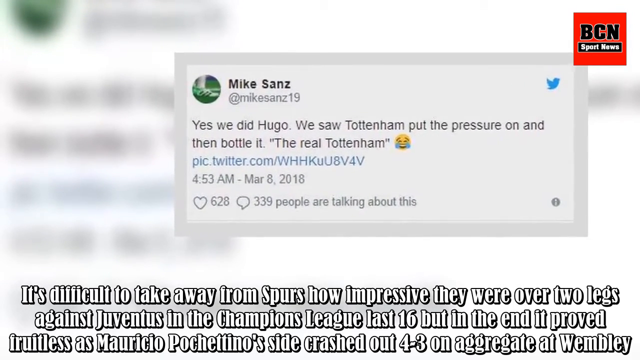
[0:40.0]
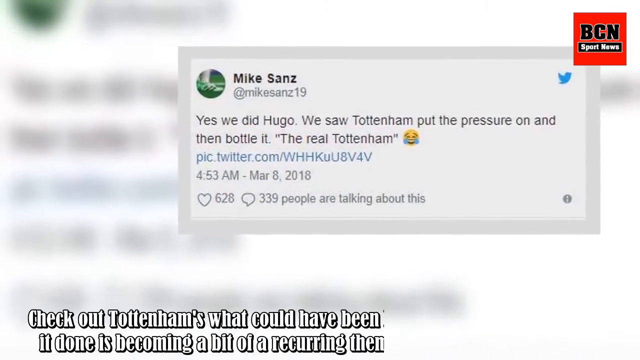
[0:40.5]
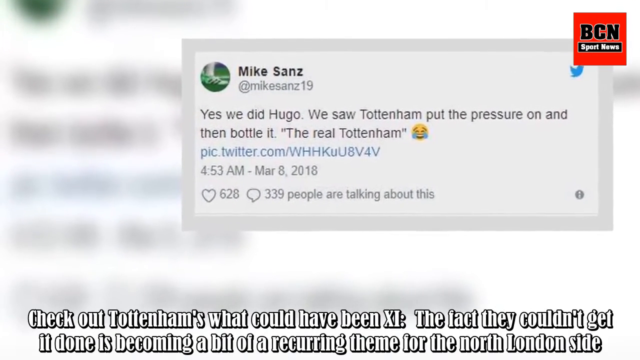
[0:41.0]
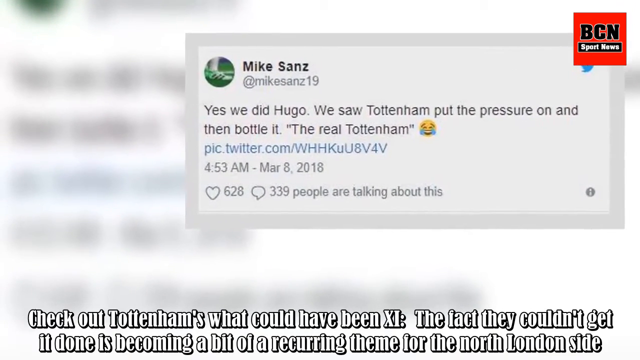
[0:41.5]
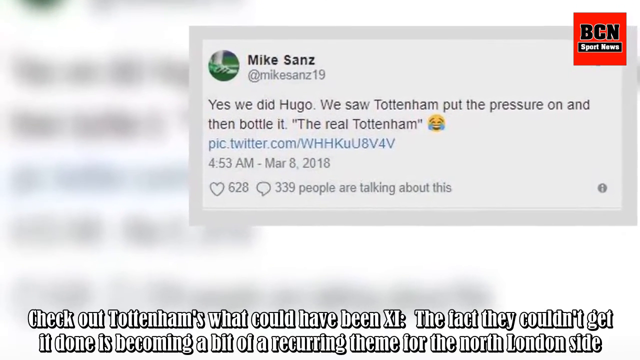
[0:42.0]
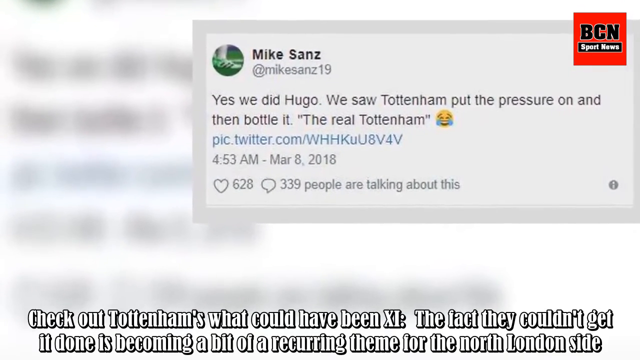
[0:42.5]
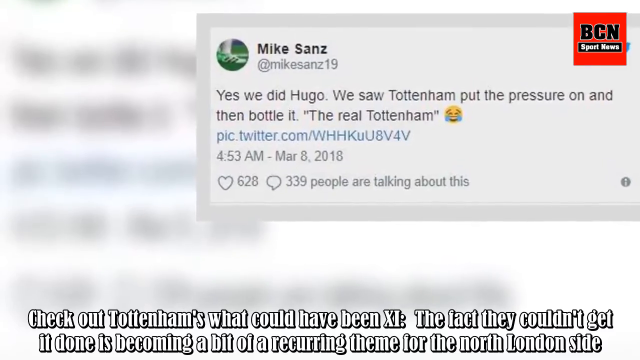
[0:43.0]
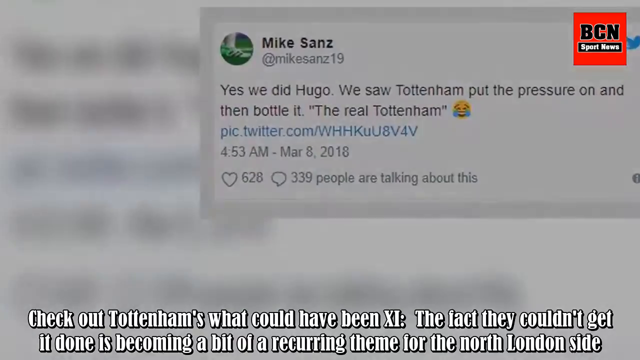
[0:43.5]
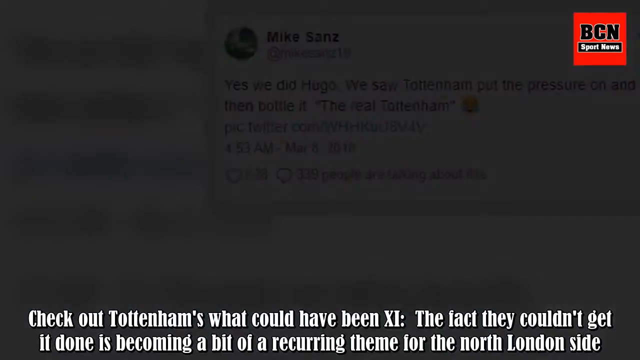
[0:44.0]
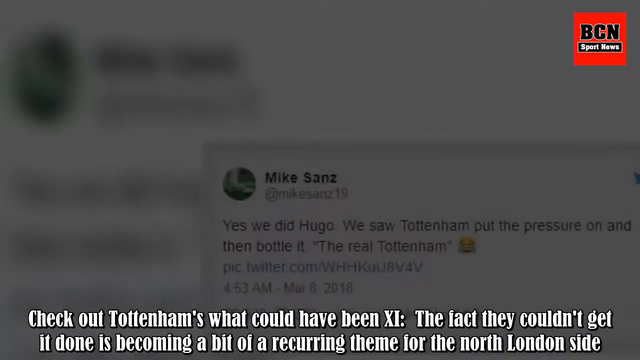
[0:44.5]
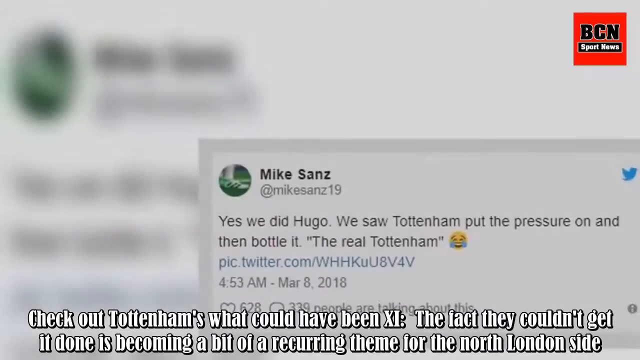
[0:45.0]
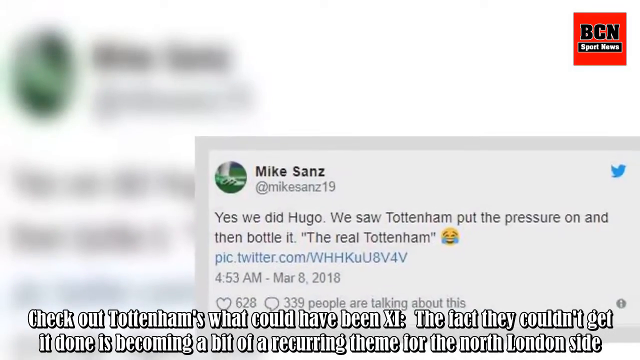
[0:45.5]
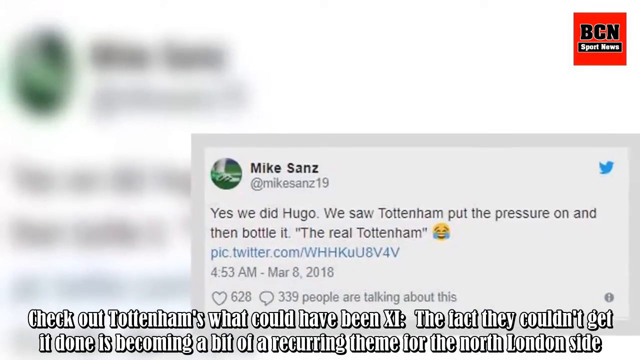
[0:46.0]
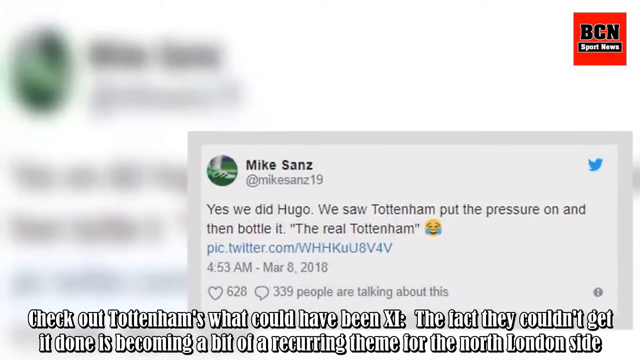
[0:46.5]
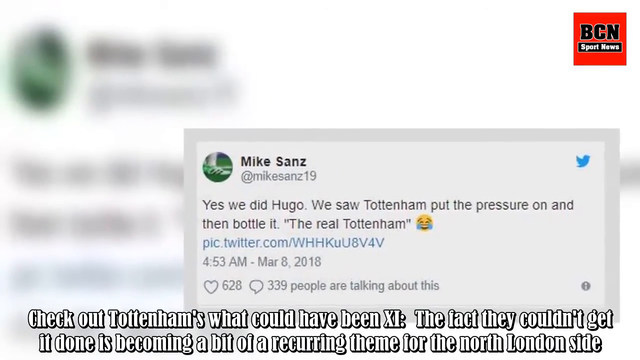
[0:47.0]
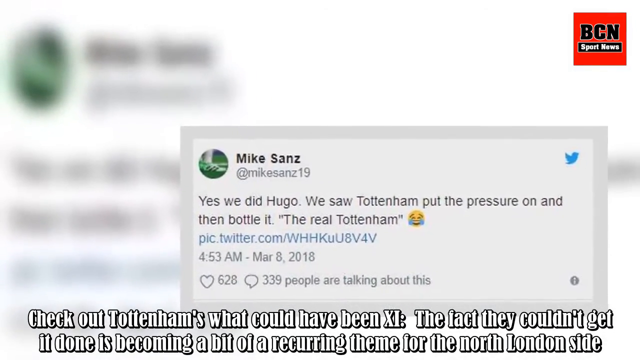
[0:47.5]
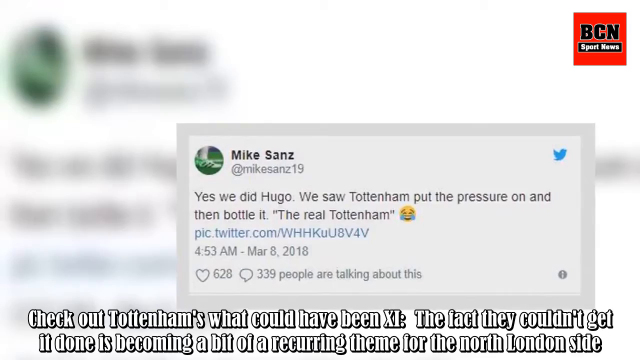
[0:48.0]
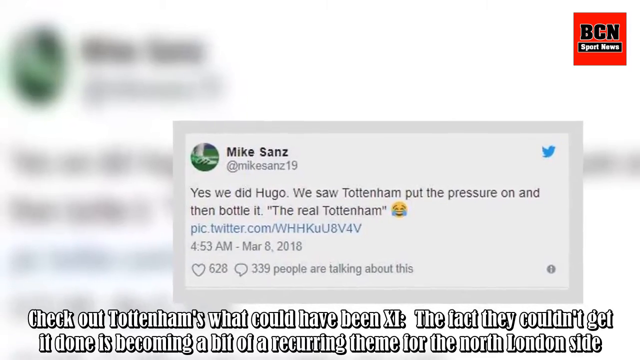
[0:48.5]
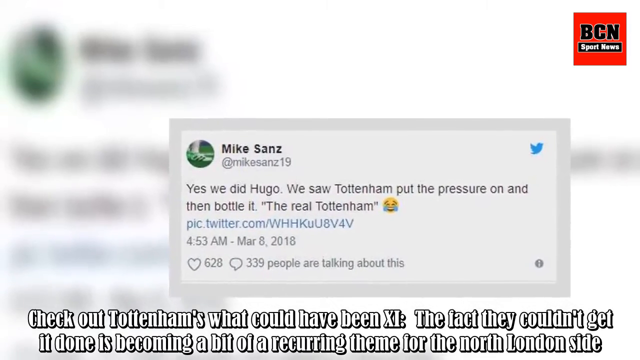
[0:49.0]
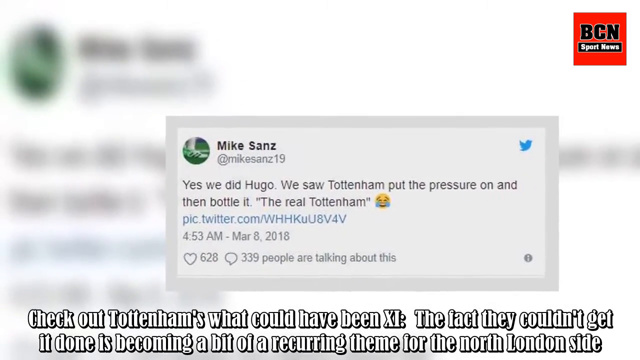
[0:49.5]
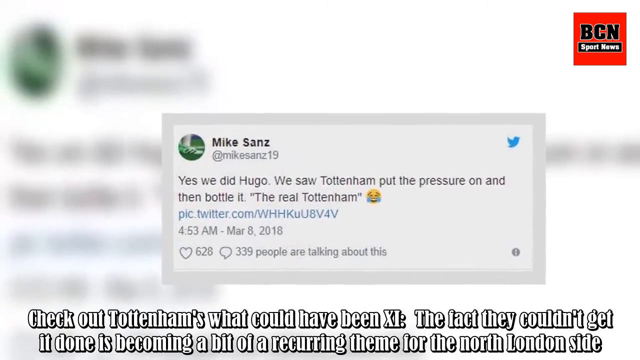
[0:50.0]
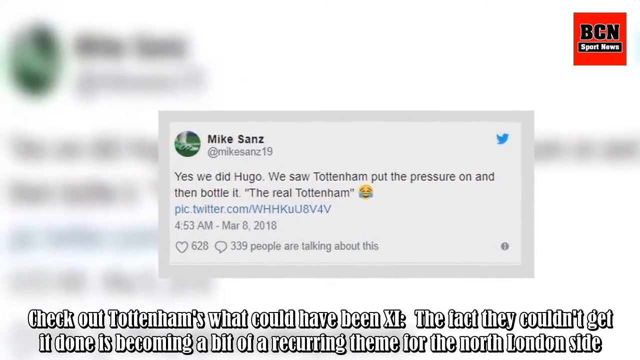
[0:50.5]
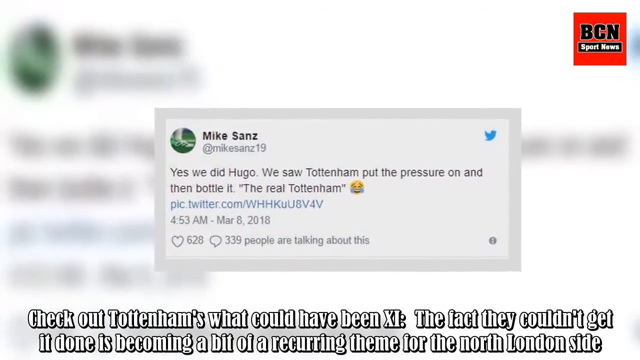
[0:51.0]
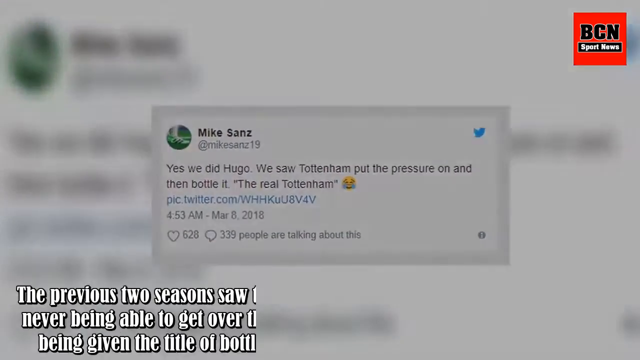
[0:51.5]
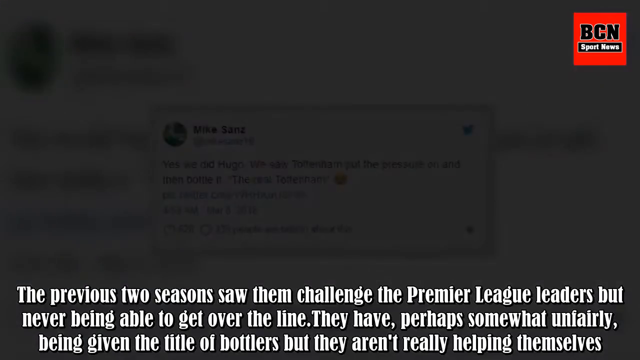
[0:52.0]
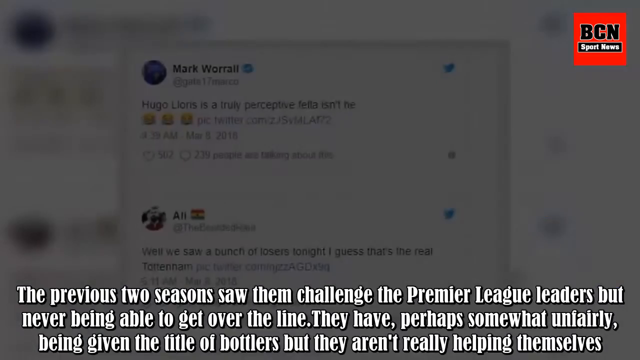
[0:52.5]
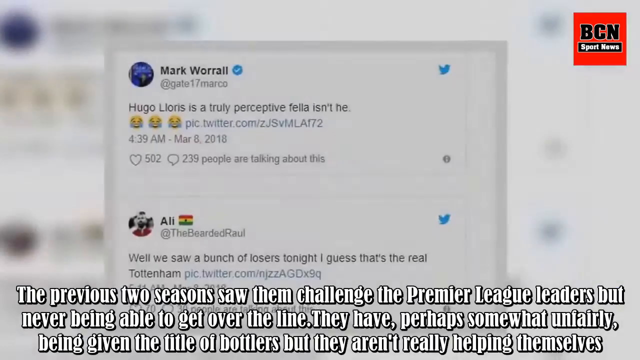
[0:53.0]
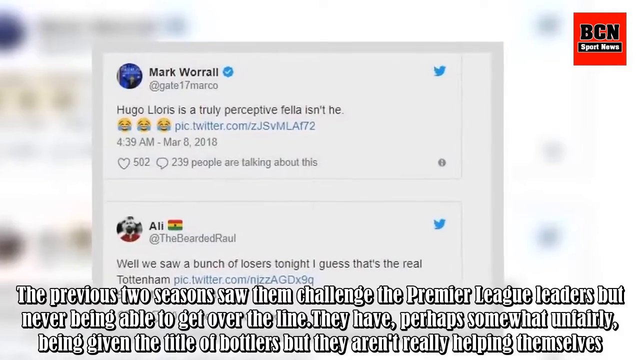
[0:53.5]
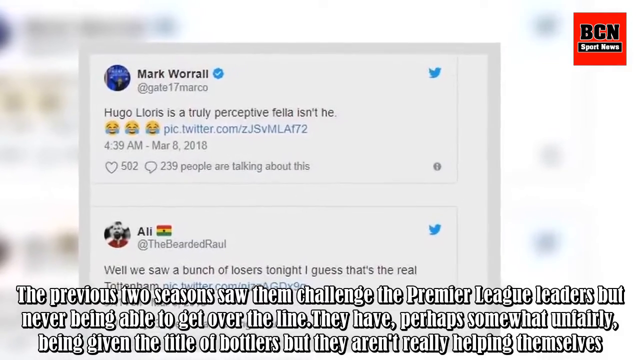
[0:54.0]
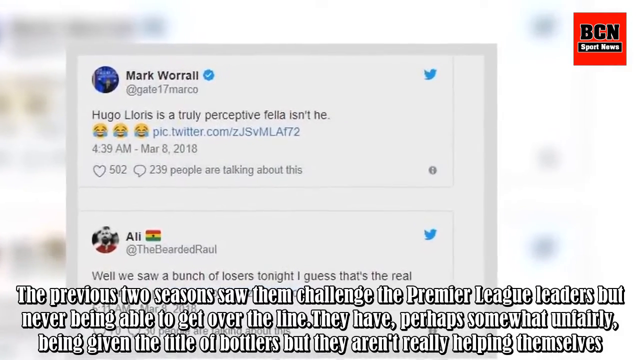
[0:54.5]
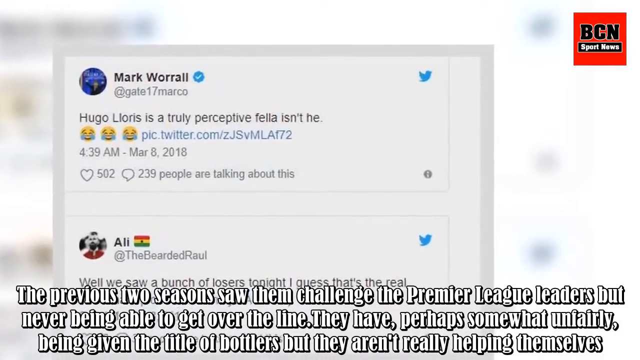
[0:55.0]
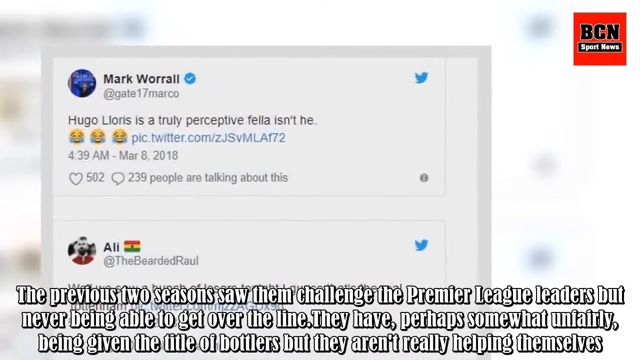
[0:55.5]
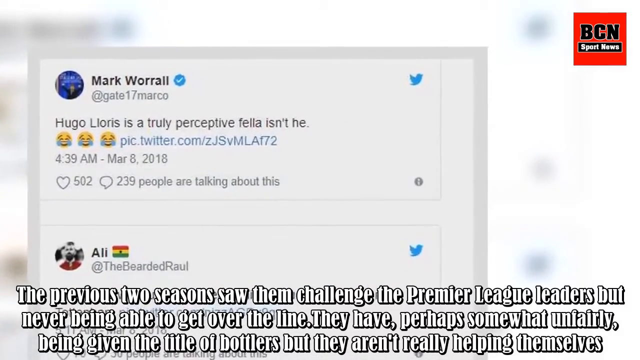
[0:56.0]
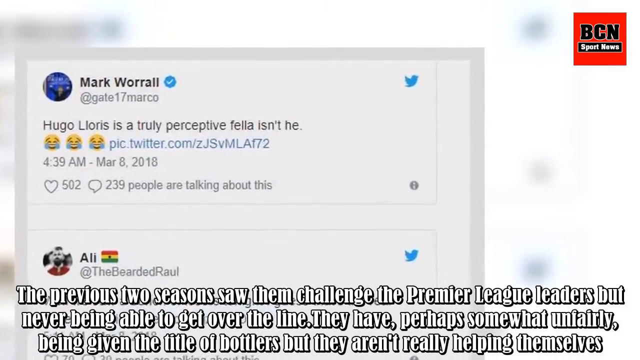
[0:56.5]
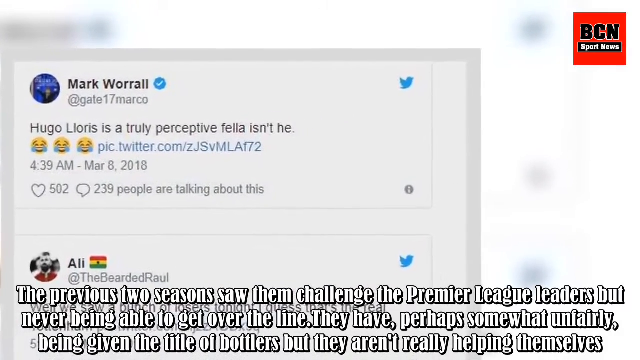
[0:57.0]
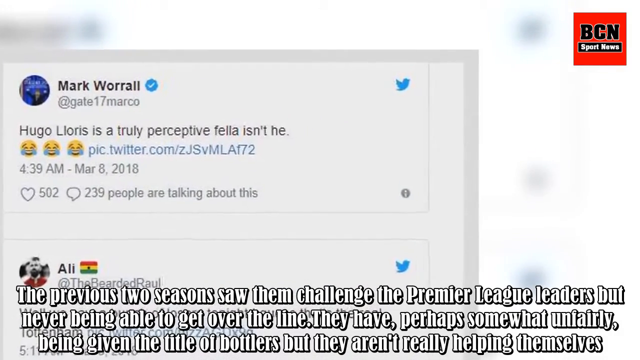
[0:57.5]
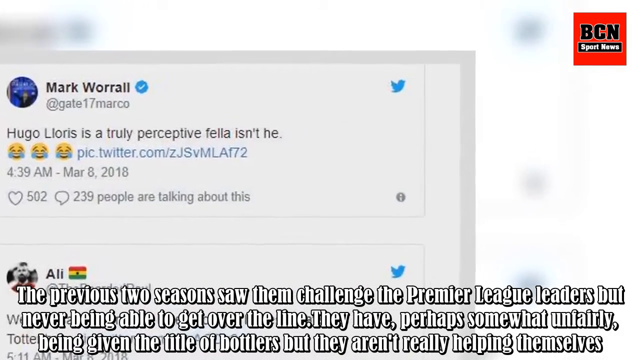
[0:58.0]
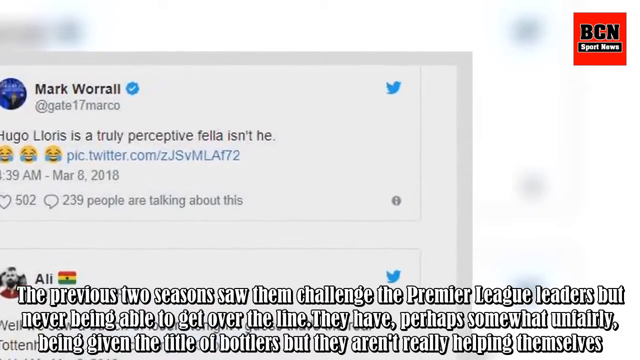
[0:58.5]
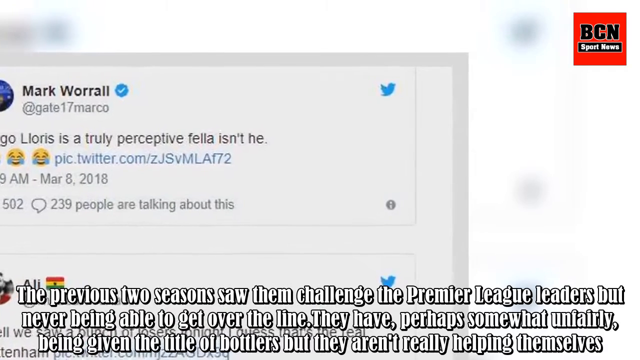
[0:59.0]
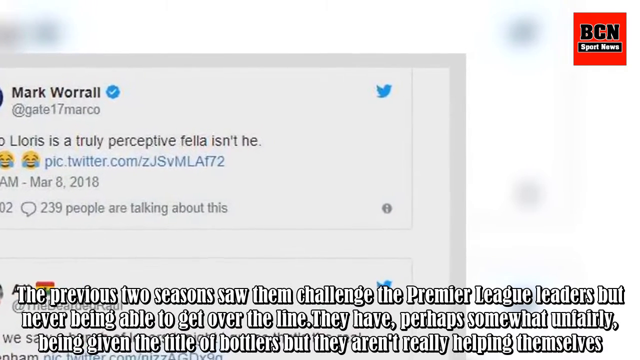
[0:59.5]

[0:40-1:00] The rectangular tweet posted by Mike Sands moves toward the top right corner. The captions at the bottom change to read: "Check out Tottenham's What Could Have Been XI: The fact that they couldn't get it done is becoming a bit of a recurring theme for the North London side." Another rectangular tweet by Mike Sanz appears at the bottom right and moves toward the center. Two tweets then appear, one on top and one on the bottom; the top one was posted by Mark Worrall and the bottom one by someone named Ali. The captions change again to read: "The previous two seasons saw them challenge the Premier League leaders, but never been able to get it over the line. They have, perhaps somewhat unfairly, being given the title of bottlers, but They aren't really helping themselves"